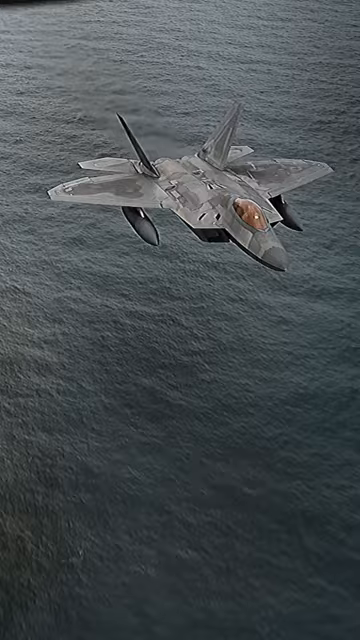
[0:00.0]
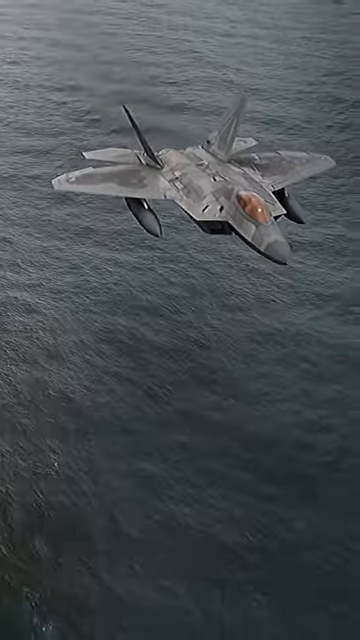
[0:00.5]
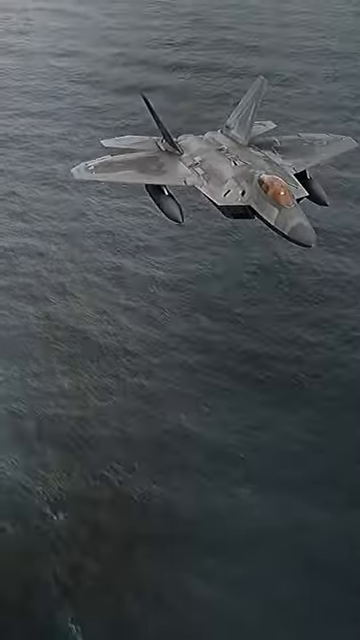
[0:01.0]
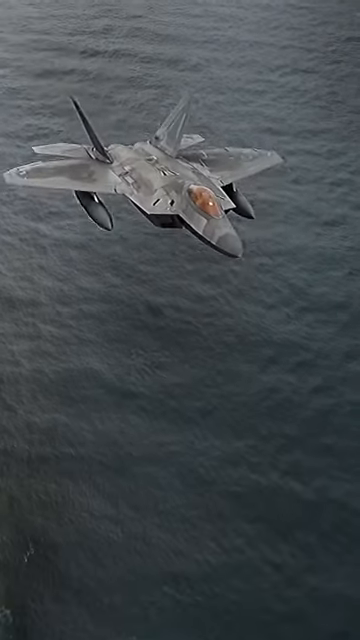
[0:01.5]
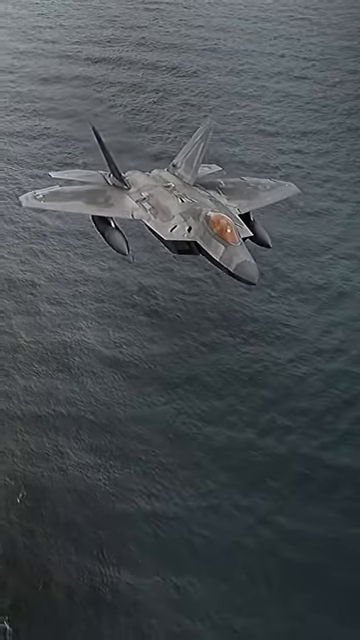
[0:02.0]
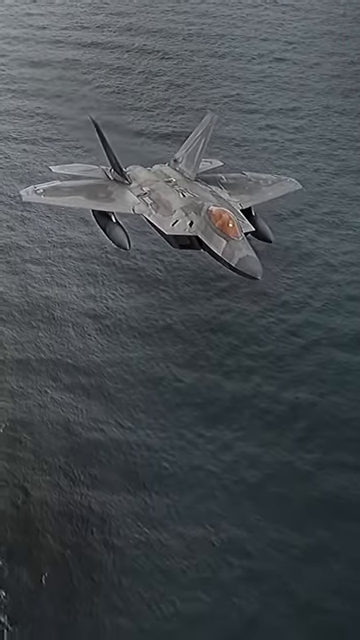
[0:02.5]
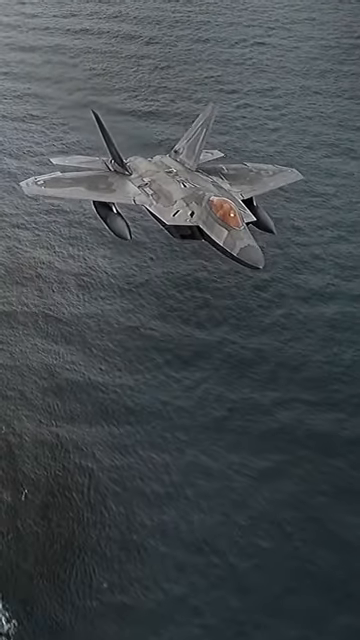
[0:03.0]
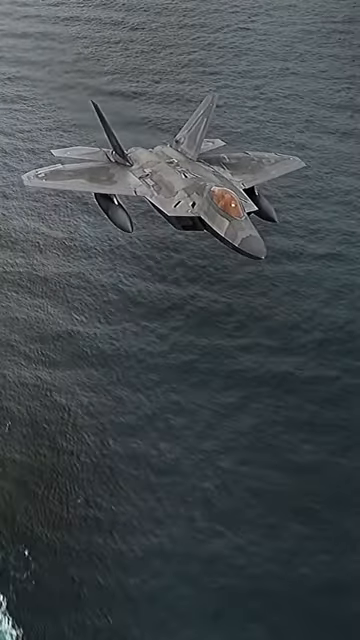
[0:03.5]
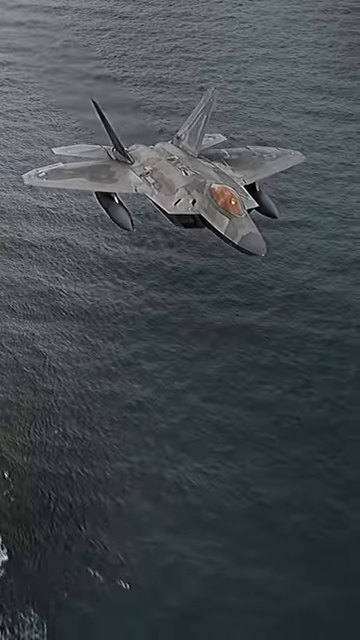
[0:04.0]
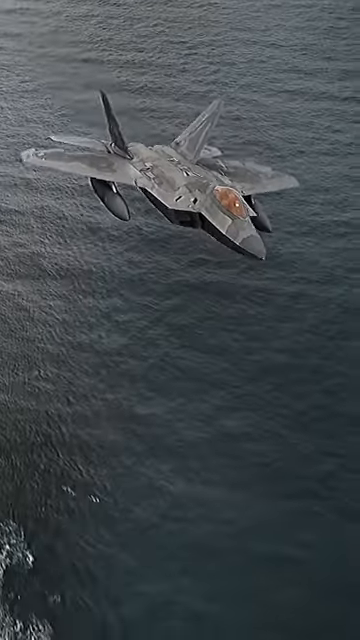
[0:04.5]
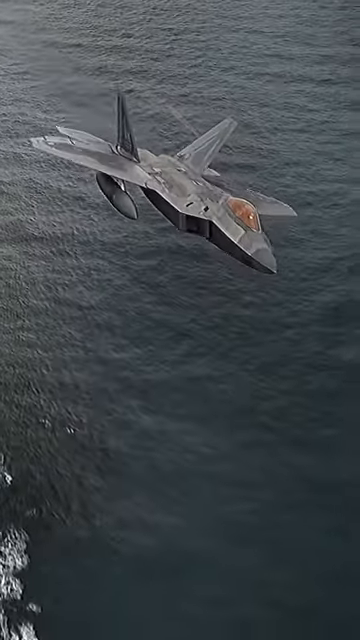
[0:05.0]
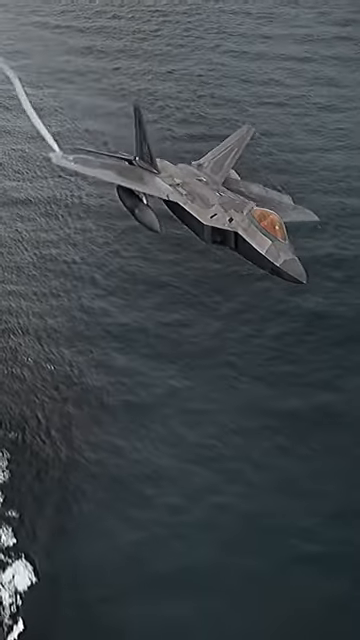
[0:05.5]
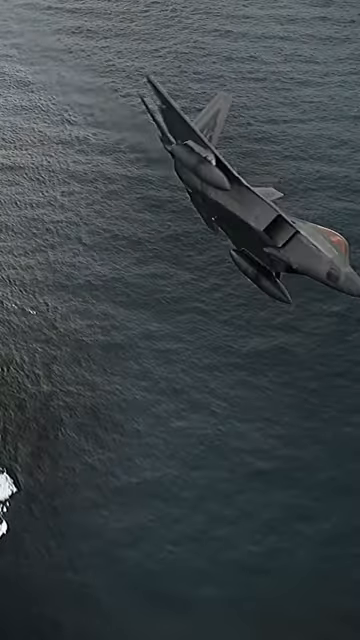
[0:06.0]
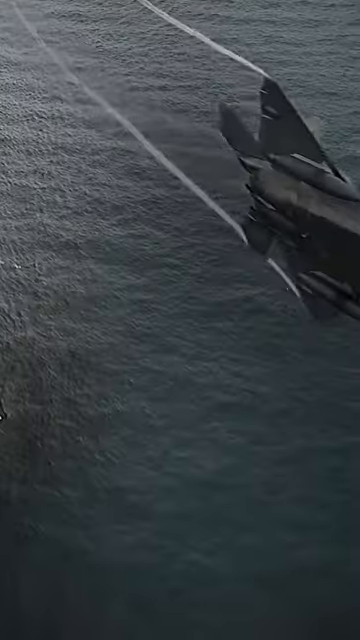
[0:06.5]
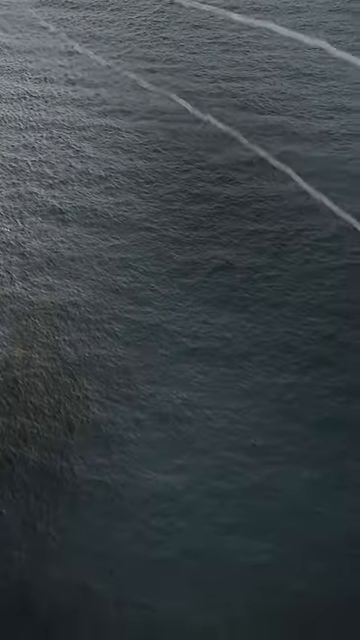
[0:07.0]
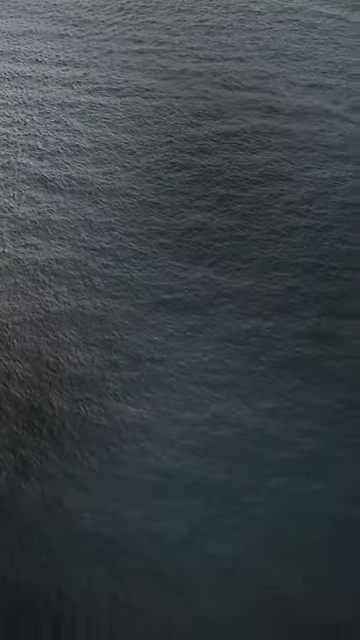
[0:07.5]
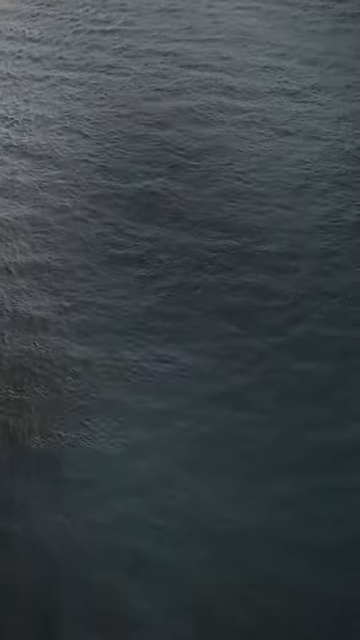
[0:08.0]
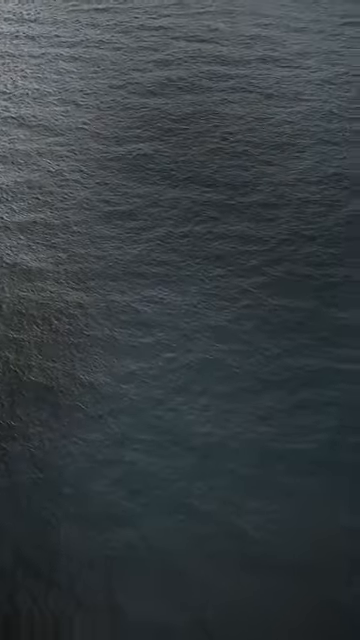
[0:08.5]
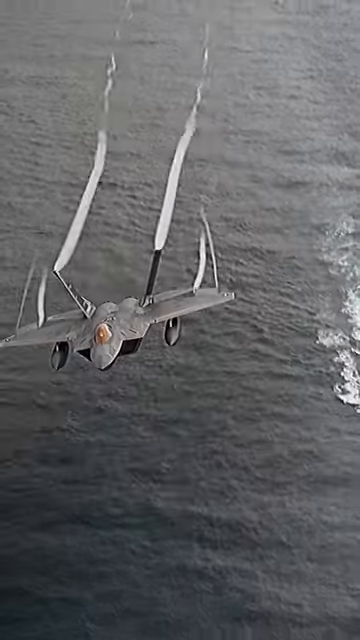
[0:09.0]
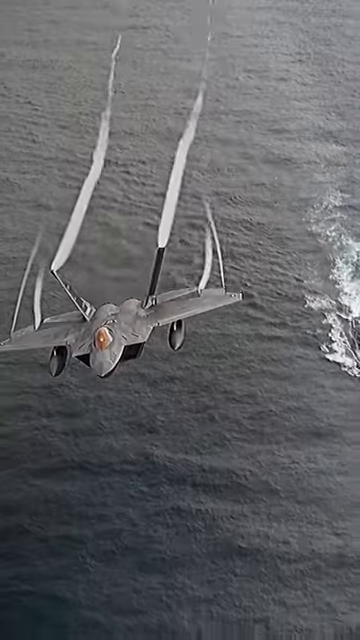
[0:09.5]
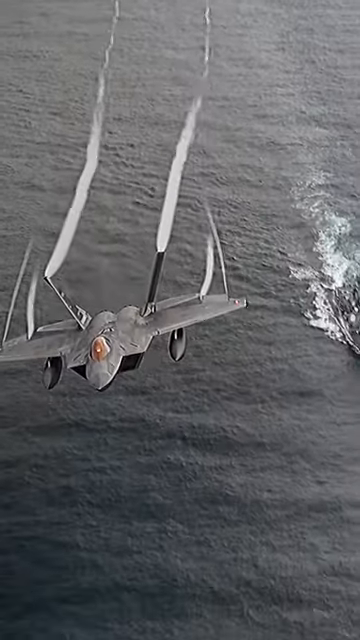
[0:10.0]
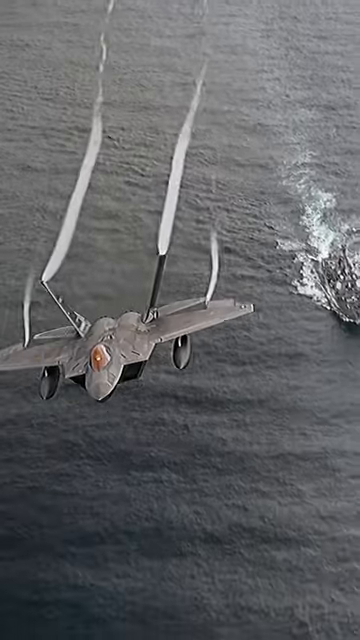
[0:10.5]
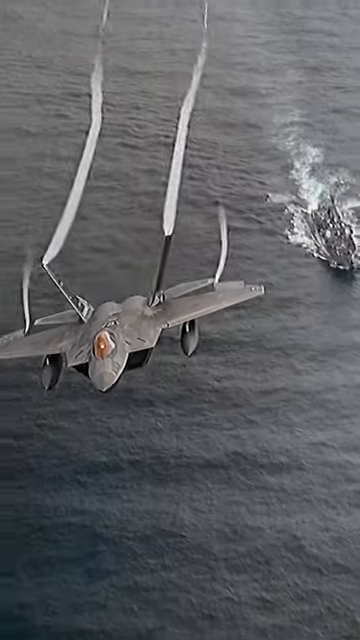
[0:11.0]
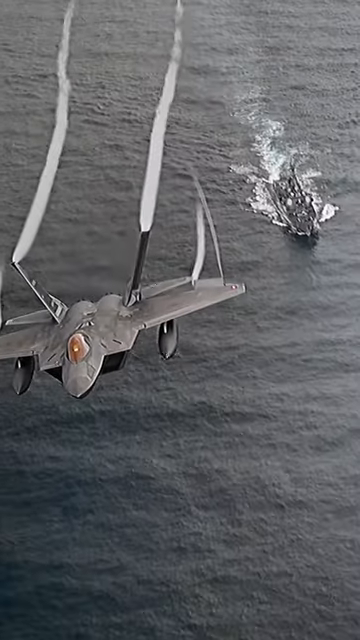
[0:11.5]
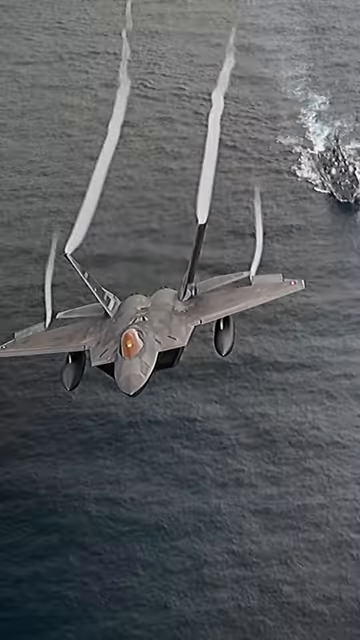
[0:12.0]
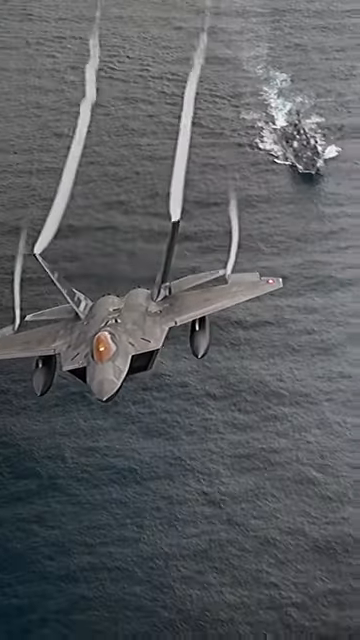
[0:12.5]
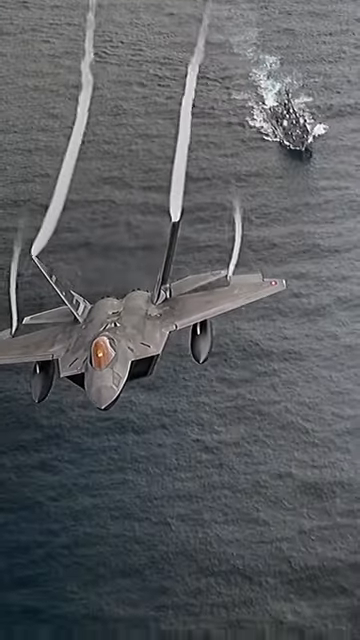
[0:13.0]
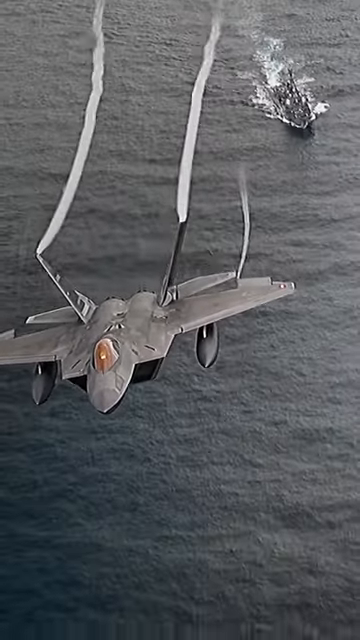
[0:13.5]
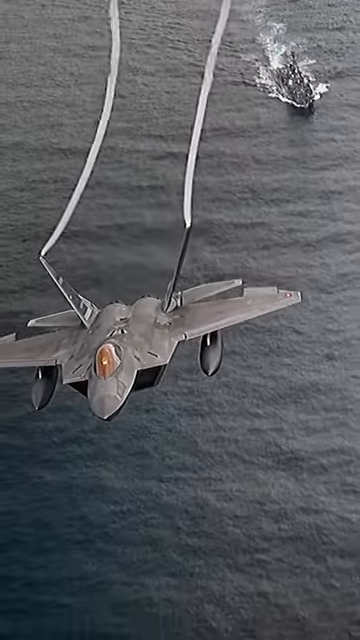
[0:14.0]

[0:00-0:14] A gray jet fighter plane with missiles below its wings flies above a body of water, not very high above it. The water has barely any waves and is dark blue. The jet makes a turn, and as it turns, some kind of white ejection comes from the wings and disperses from the jet. In the next scene, a lot of white disperses from the jet as it flies towards the camera. Below the jet to the right, a ship is floating on the water, moving rather quickly, with white water splashing where it is going. The jet begins to fly higher and higher, and the inside of the cockpit is partly visible, a brownish area.